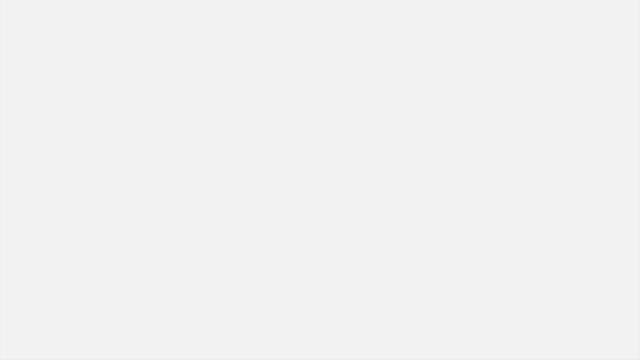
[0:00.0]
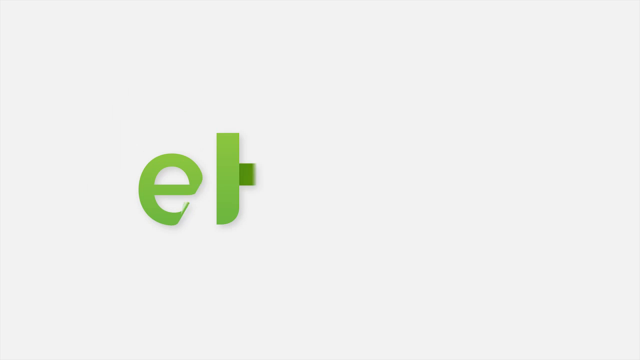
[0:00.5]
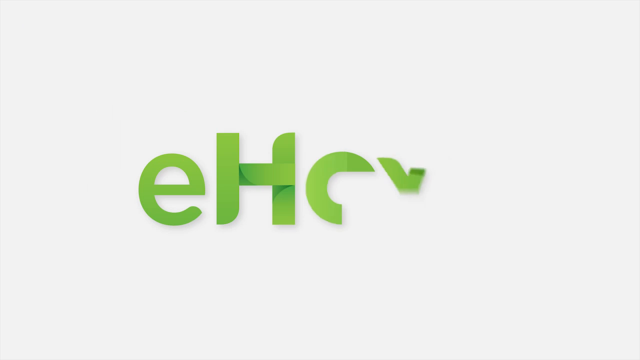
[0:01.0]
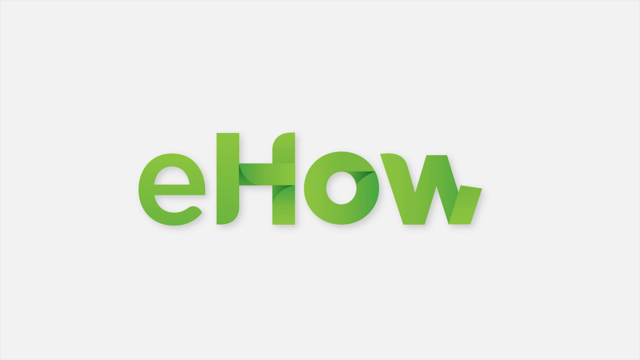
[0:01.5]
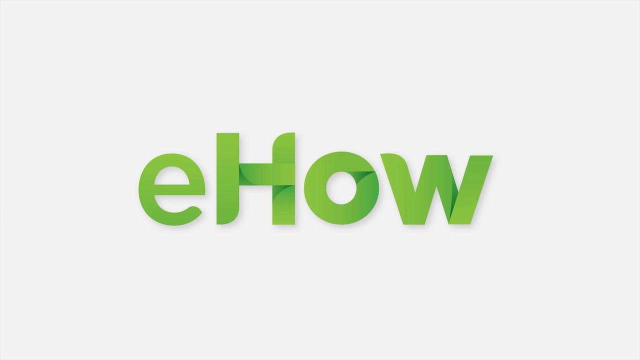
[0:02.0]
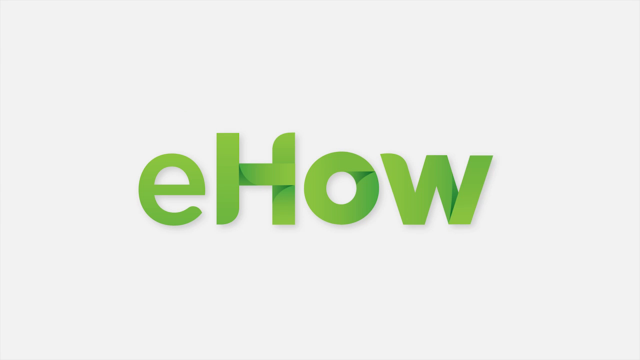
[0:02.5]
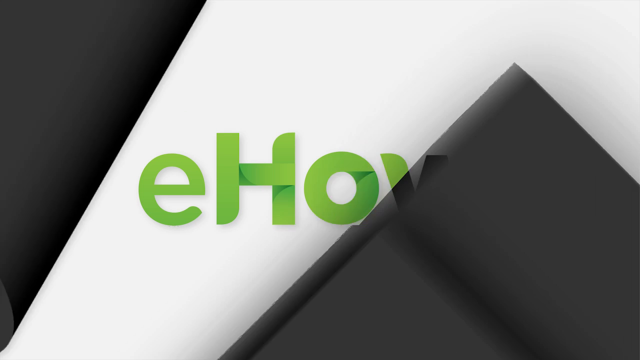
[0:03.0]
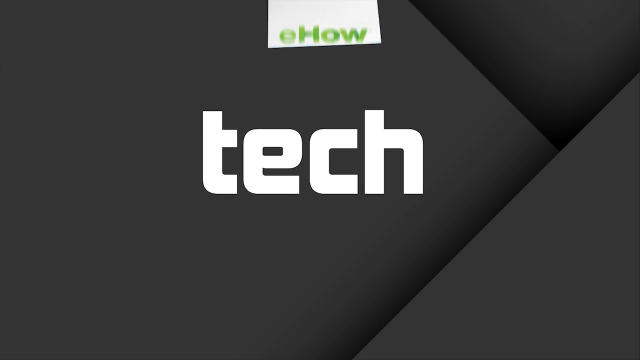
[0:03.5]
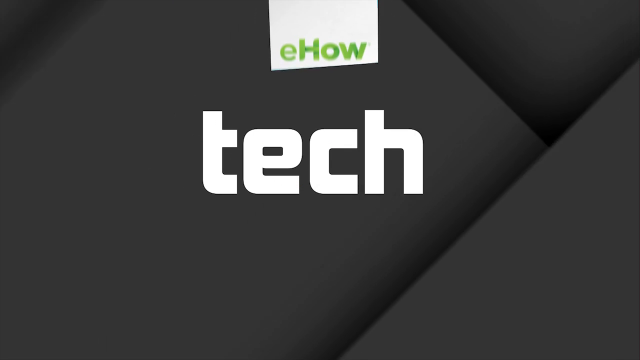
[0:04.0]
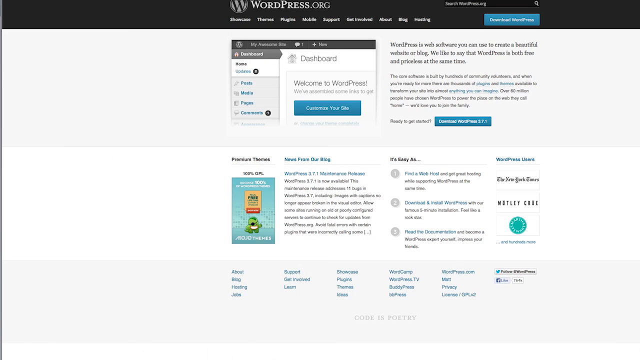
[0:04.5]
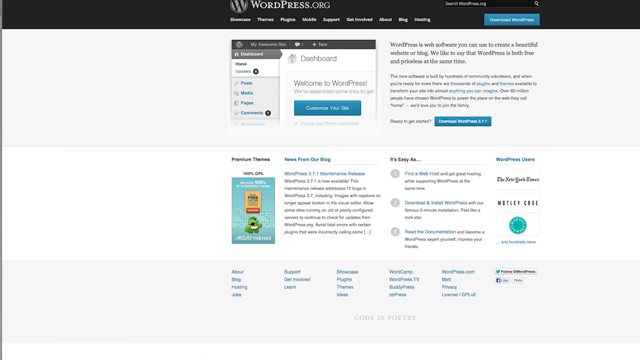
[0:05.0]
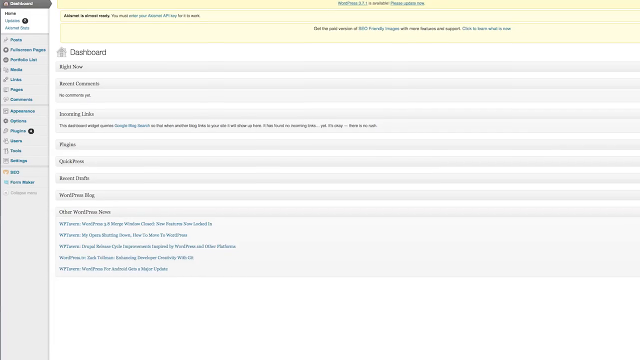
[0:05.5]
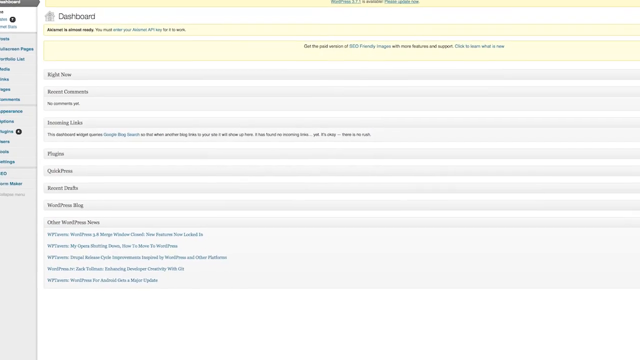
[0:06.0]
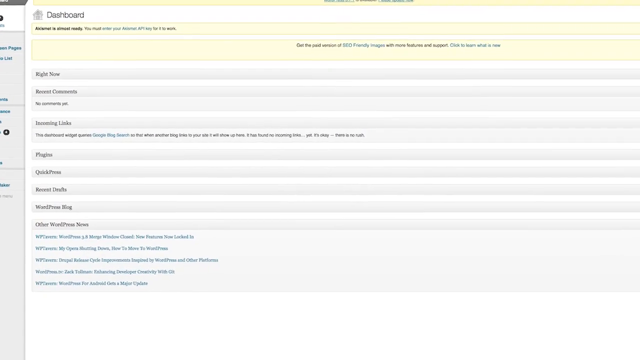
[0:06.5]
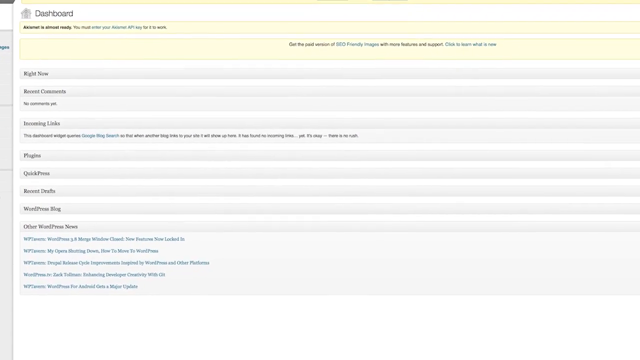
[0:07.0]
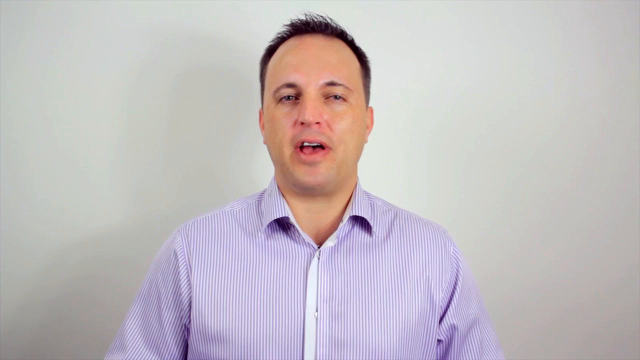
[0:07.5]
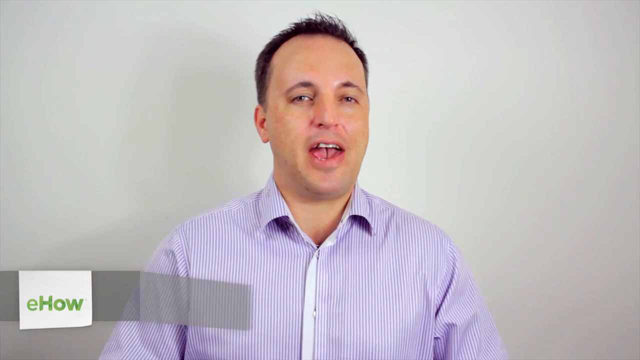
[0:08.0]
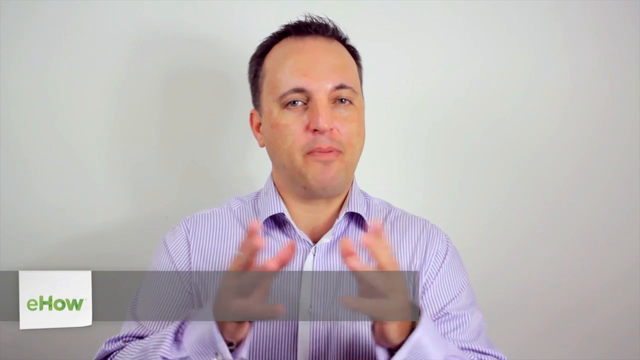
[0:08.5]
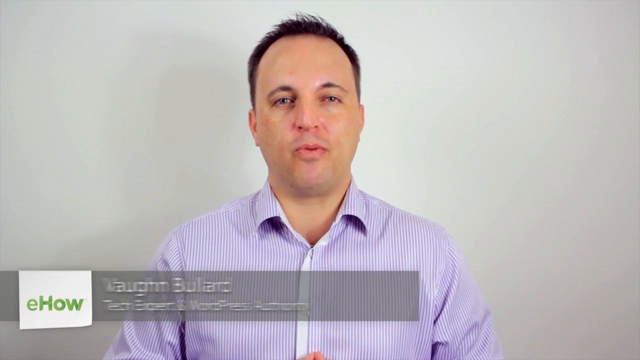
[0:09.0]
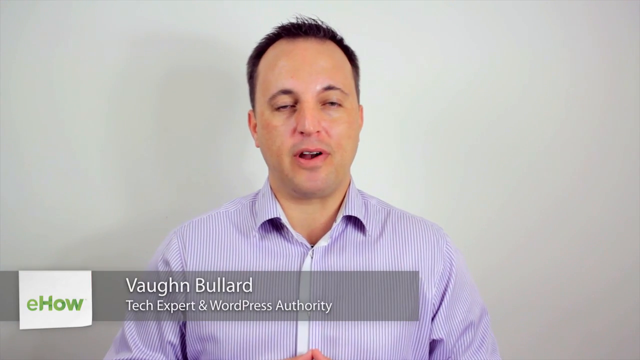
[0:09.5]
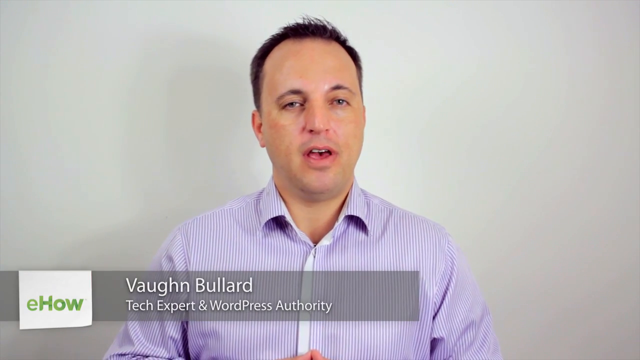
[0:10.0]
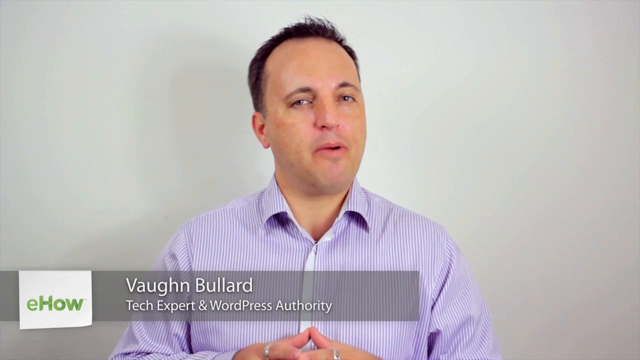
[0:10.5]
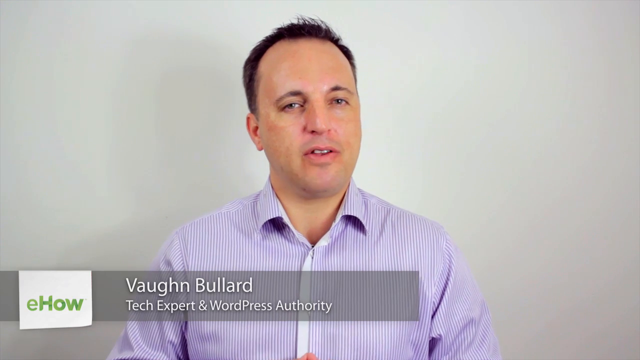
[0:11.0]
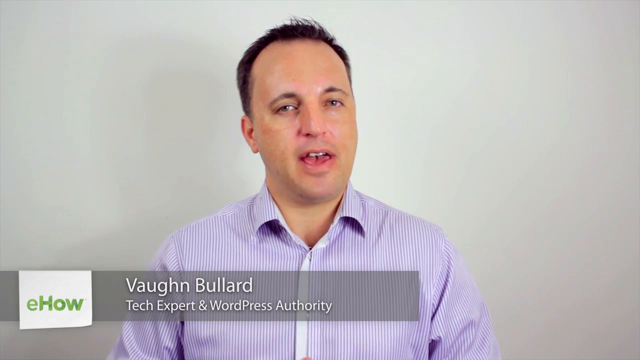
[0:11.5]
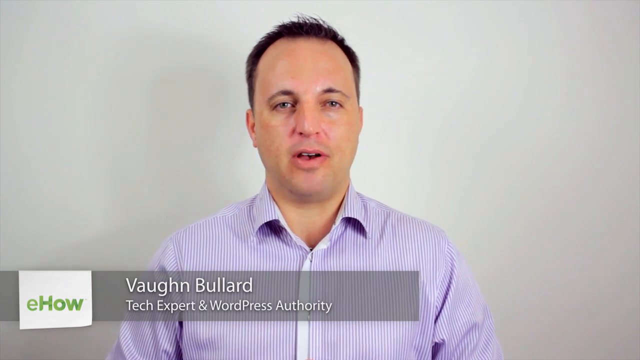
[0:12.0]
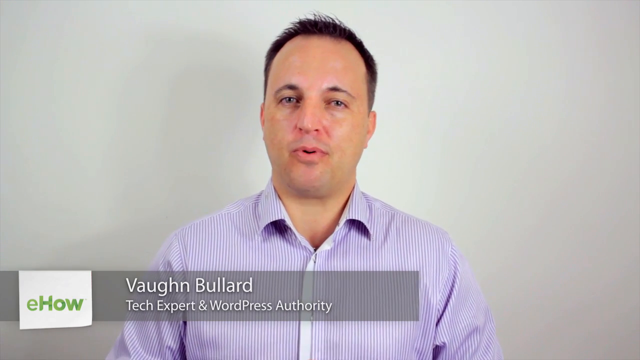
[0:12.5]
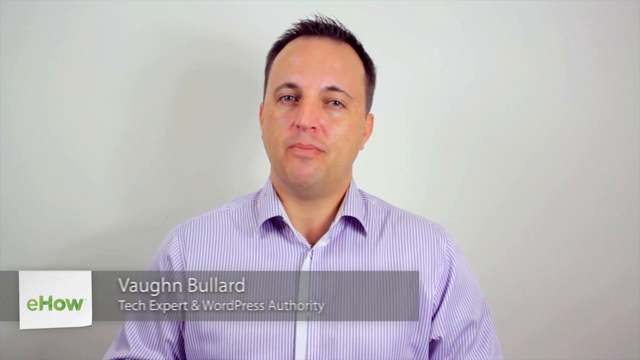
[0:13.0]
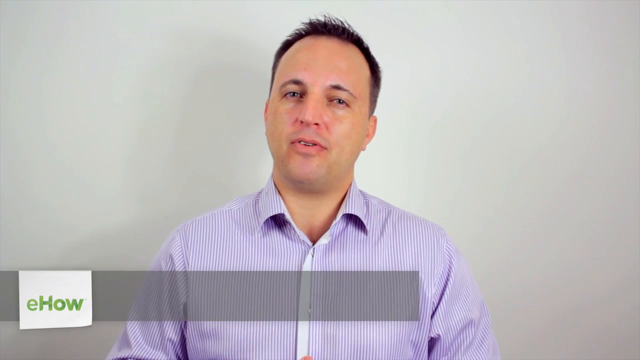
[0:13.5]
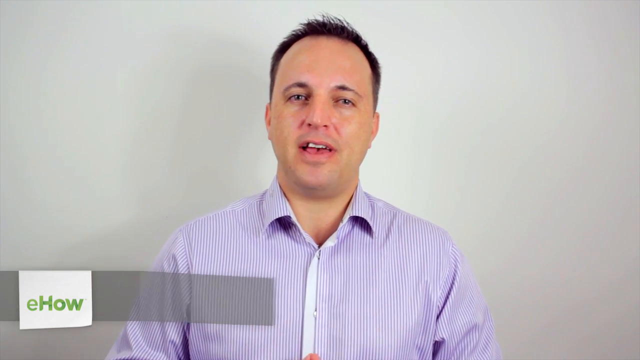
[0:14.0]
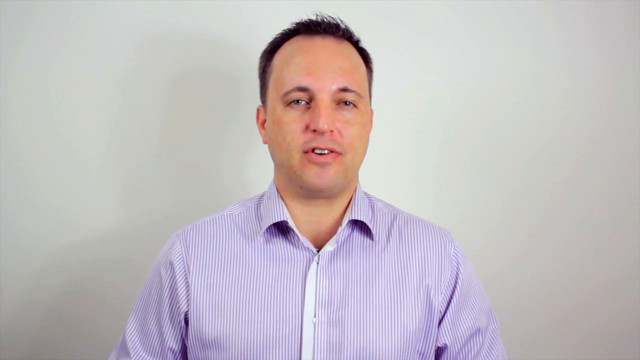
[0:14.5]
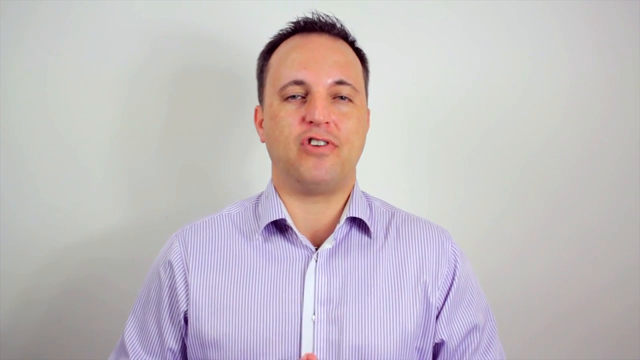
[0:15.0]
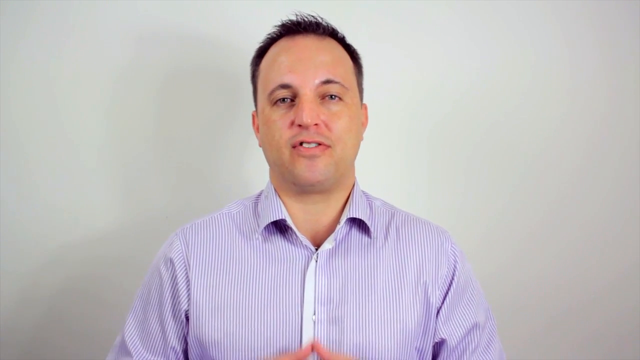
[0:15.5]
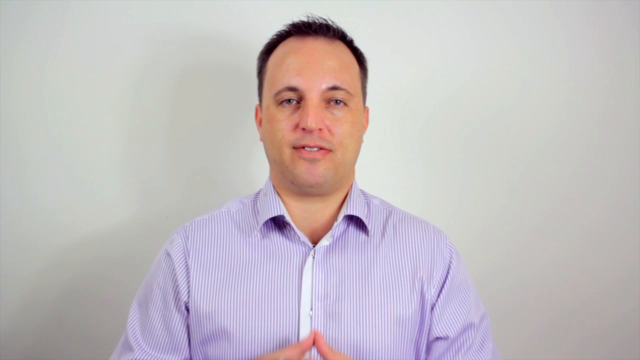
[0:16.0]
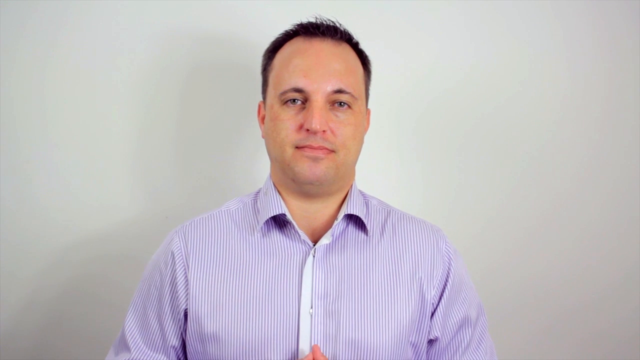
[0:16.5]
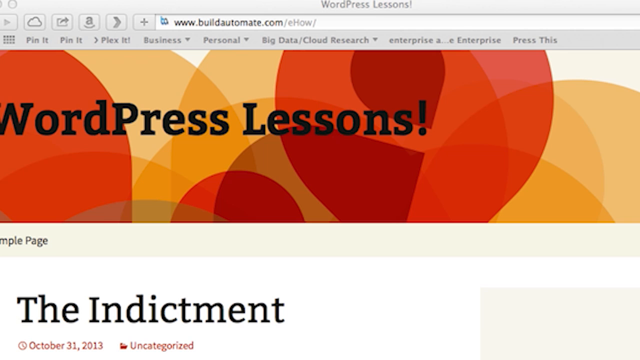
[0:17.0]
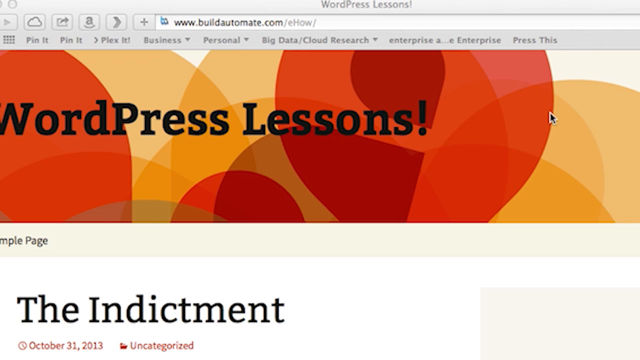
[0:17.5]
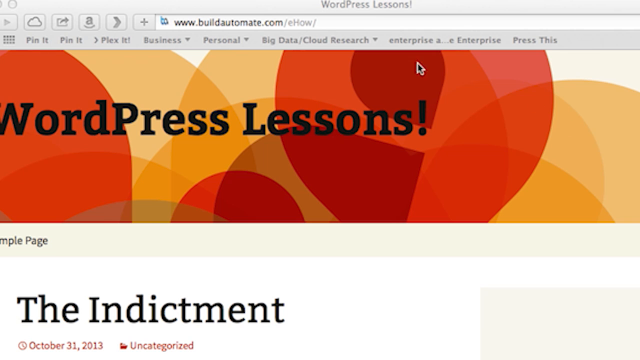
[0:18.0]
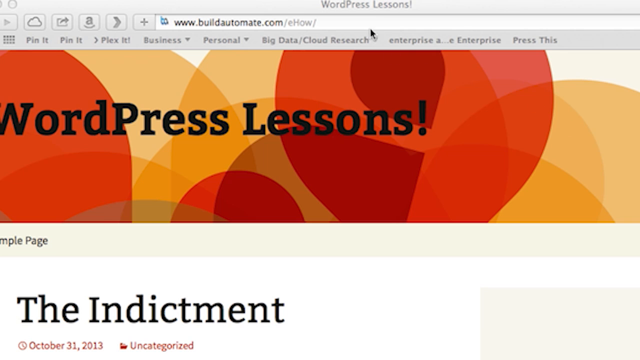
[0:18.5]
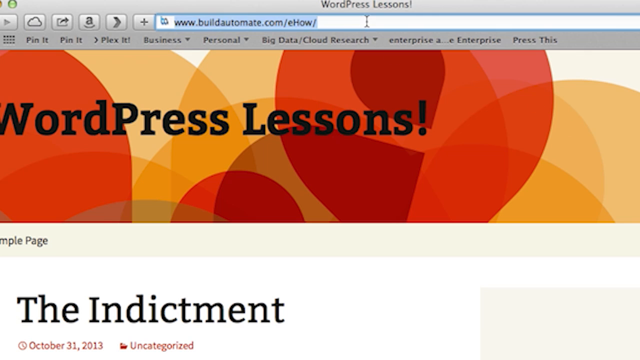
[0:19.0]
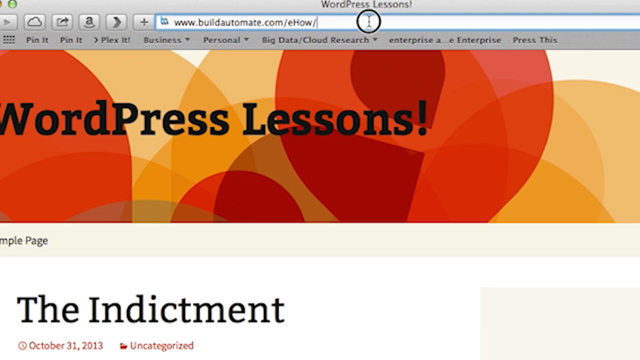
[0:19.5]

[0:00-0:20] The video opens with the eHow logo from the eHow video tutorial series: it has a green paper texture that looks like it is folded over on the letters, with a small "e" and a capital "H". Next, the word "tech" appears in white text on a grayish-black background, with a small eHow logo above it. The video then moves to a WordPress website, shown as a screenshot in a panning shot across a WordPress home page and then the dashboard. A man in a lilac striped shirt then speaks, facing the camera. Beneath him is a caption reading "Vaughan Bullard tech expert and wordpress authority" with the eHow logo to its left; the background is white with a very soft shadow. Next comes a screen of the WordPress website reading "build automate.com", with "wordpress lessons" in the top banner, whose background has many differently colored overlapping circles. Underneath is a sample page, and below that the title reads "the indictment".